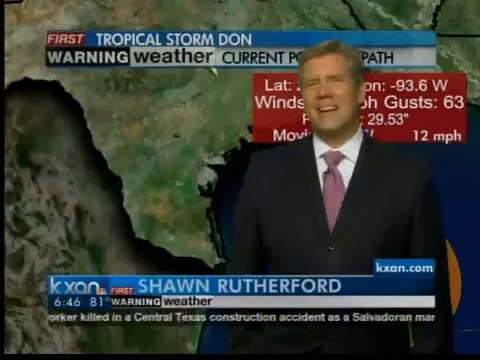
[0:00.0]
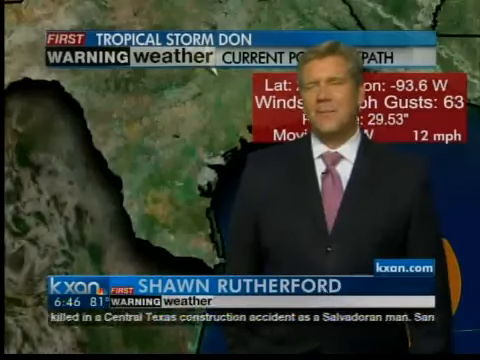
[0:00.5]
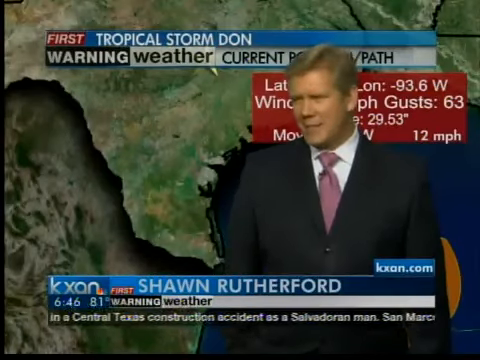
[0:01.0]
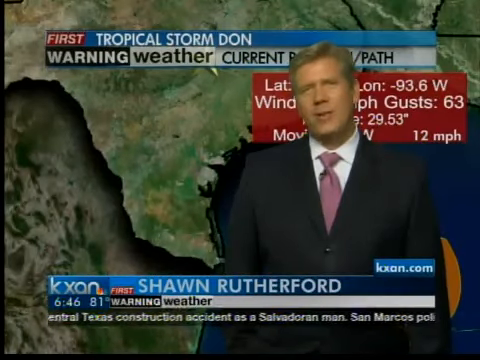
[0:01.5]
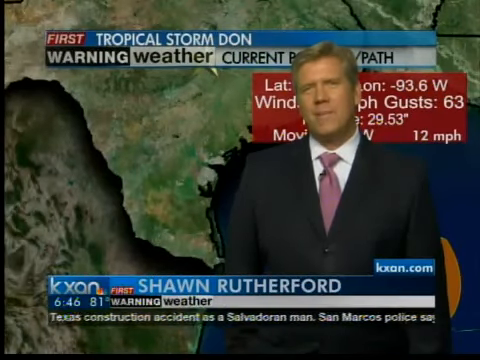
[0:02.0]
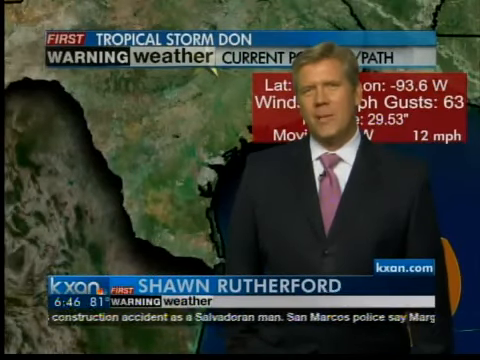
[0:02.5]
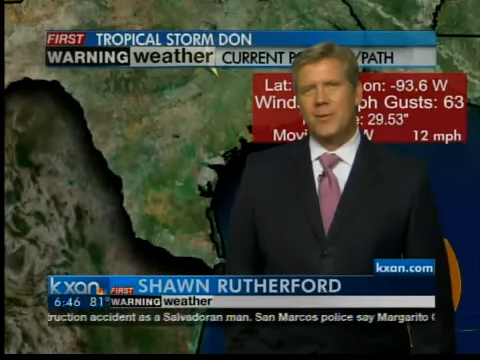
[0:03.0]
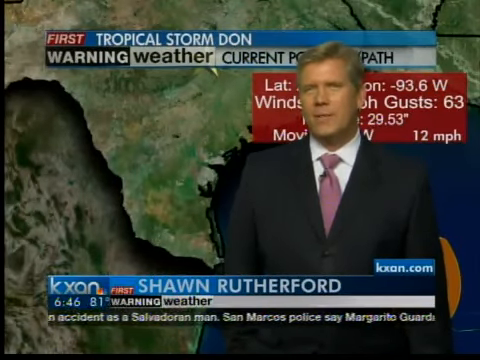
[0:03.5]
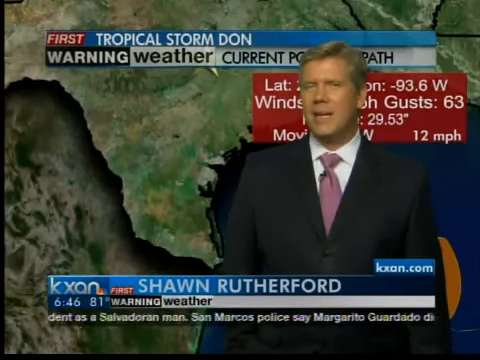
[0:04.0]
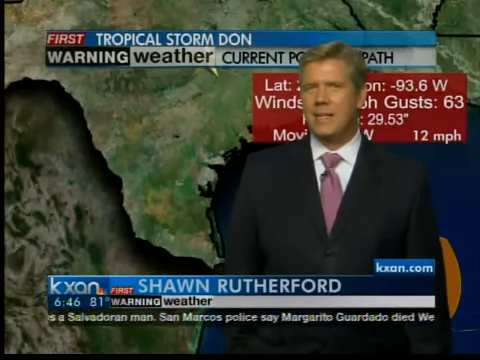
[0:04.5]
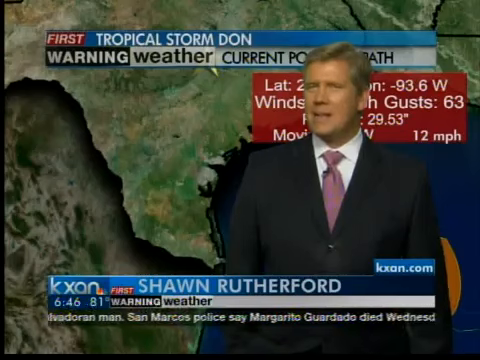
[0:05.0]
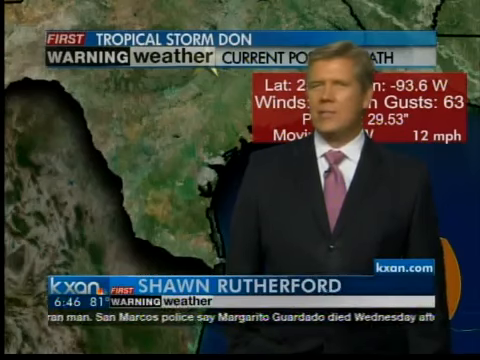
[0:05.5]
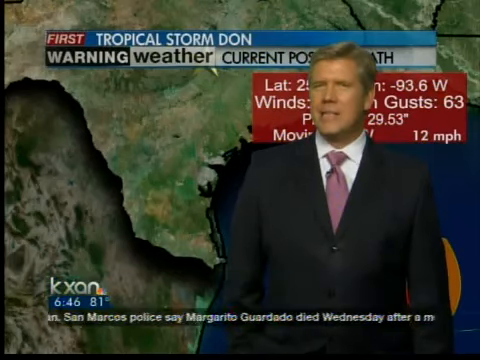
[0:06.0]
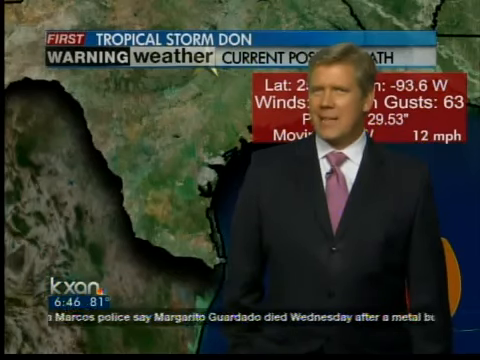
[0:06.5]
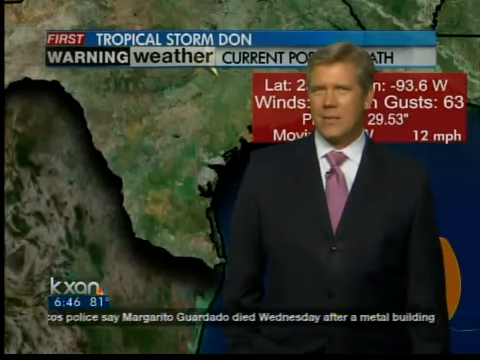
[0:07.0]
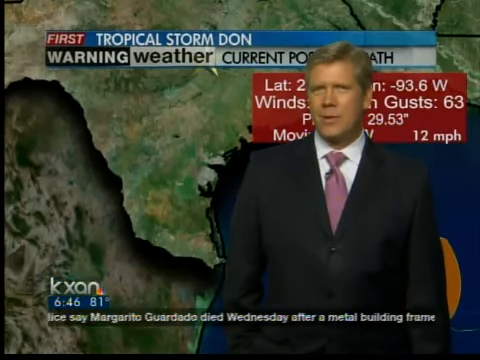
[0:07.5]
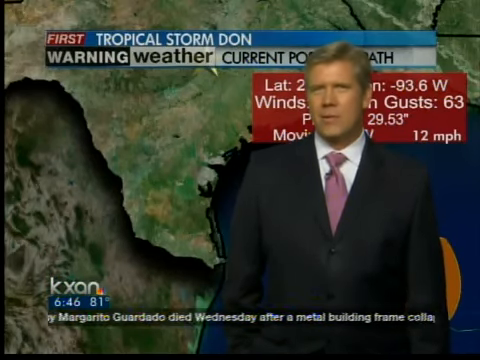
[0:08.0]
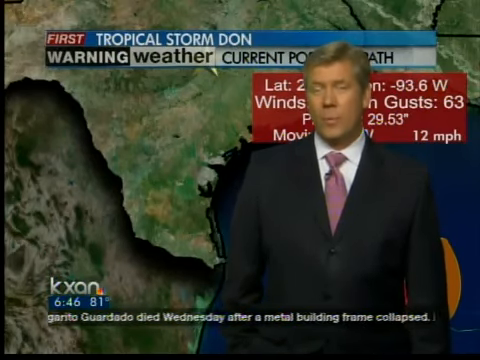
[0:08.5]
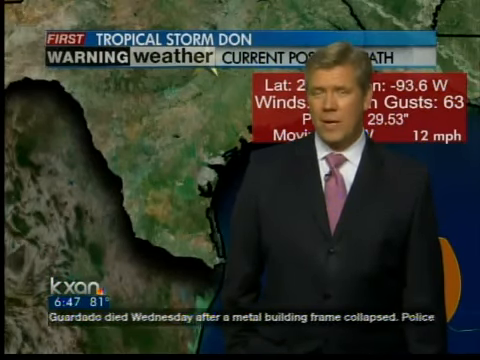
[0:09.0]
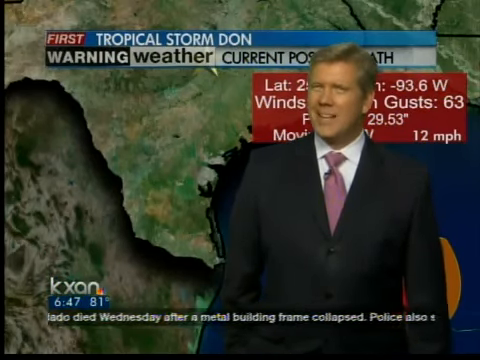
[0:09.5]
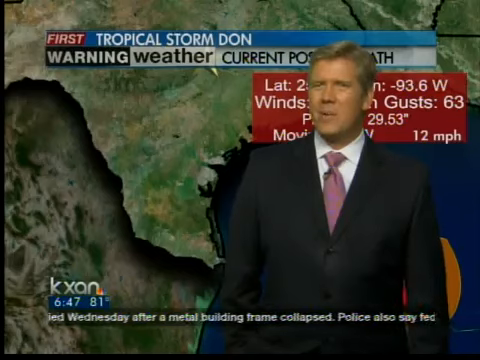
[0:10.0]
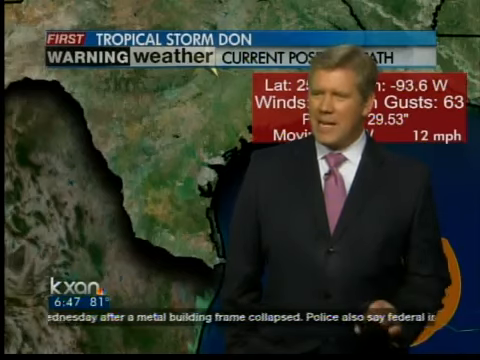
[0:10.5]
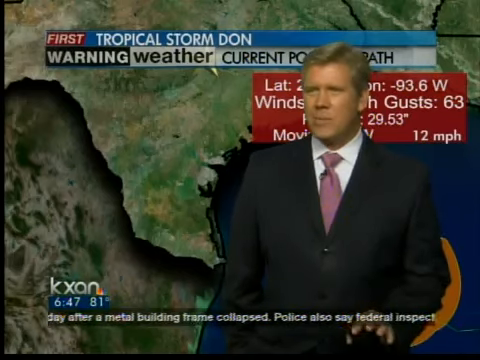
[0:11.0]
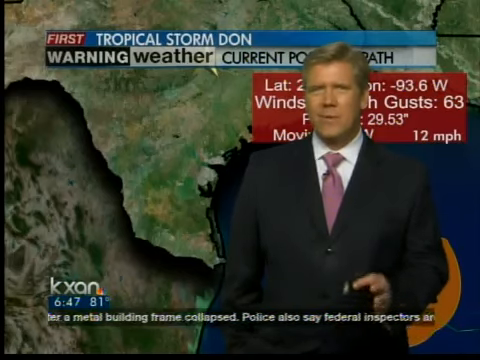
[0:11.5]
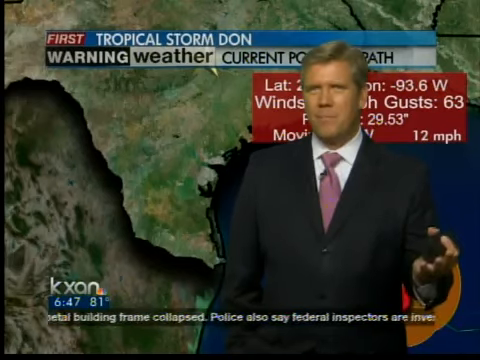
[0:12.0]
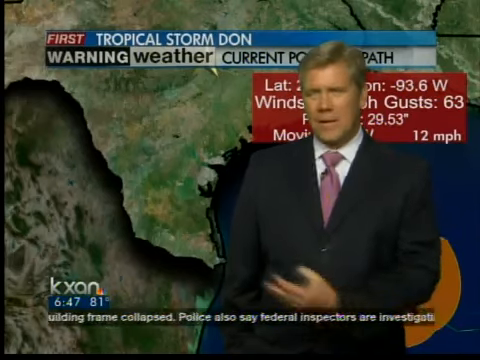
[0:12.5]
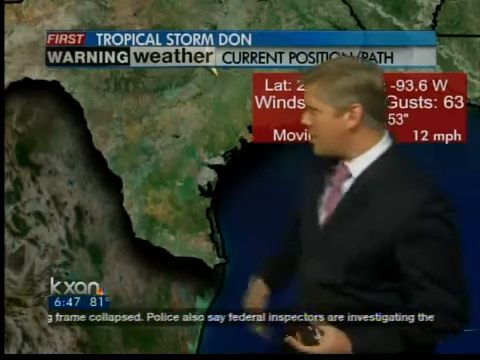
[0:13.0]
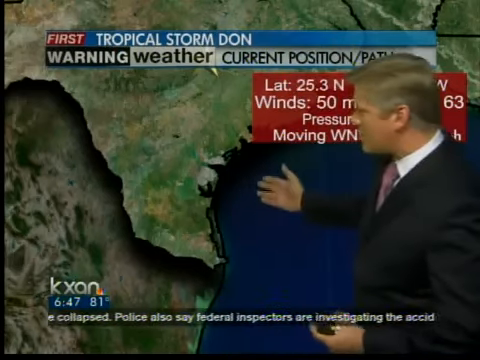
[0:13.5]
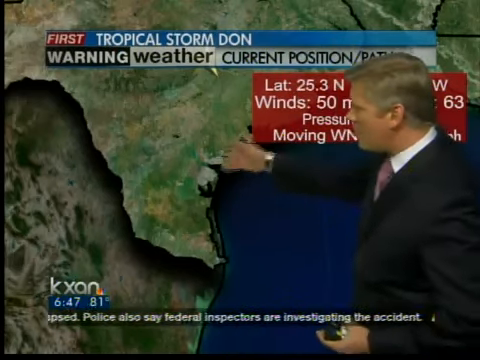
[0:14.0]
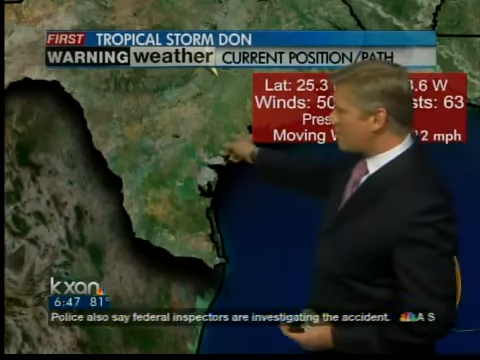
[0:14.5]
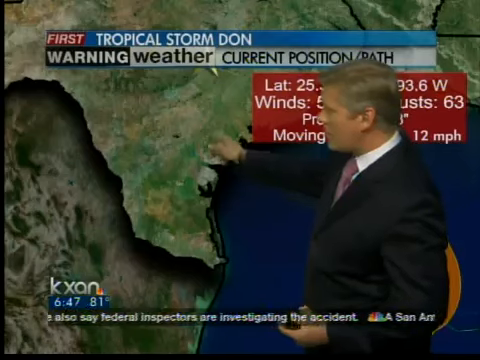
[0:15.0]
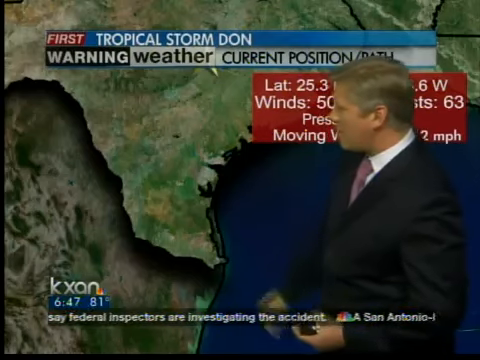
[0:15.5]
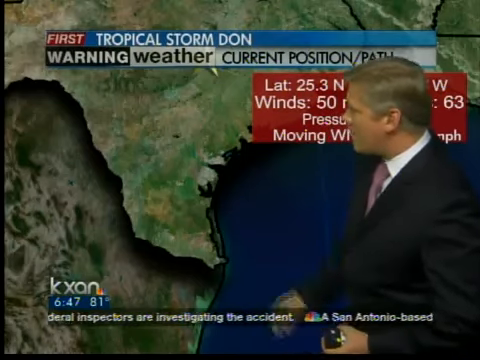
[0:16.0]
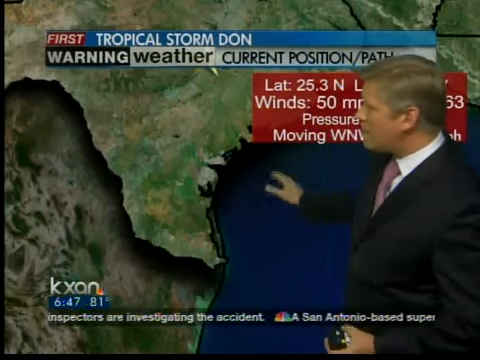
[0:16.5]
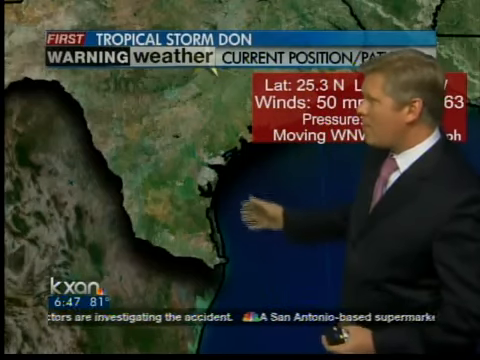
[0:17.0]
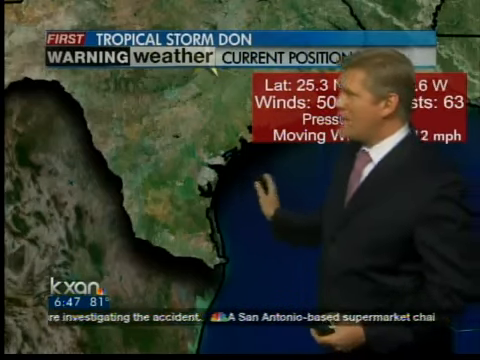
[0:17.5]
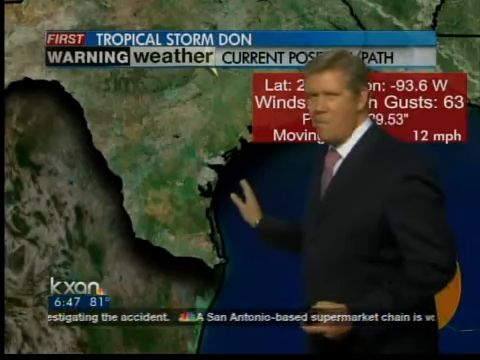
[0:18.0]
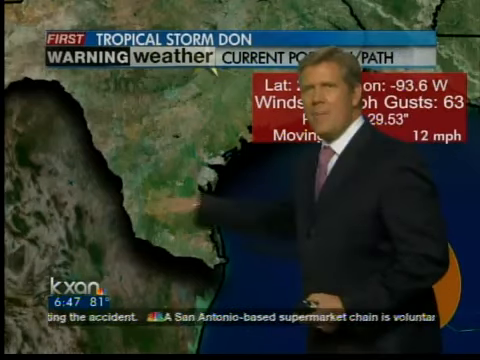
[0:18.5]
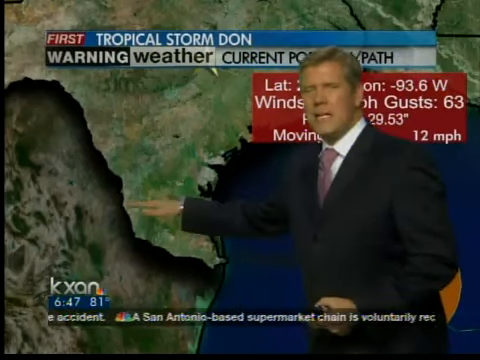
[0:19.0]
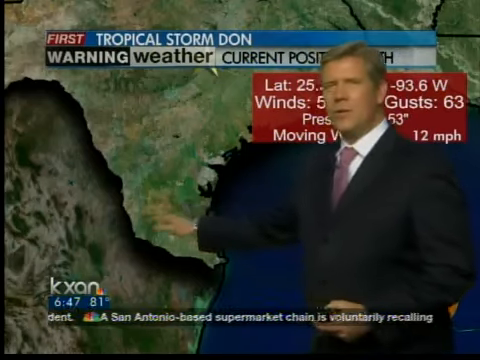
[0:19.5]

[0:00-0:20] The scene is a map of Texas. Across the top is a blue gradient bar; its top half reads "first tropical storm Don" and its bottom half reads "warning weather current position / path." The area under the word "first" is colored red, the area under "warning" is black, and the rest of that bottom segment is white. Below and to the far right of this upper bar is a red rectangle with stats such as latitude and wind speed. A weatherman partially obscures that red area. He is a Caucasian man of about his late 40s with blonde hair and a tan complexion, wearing a dark blue suit with a white shirt and a pink tie. Beneath him is another bar similar to the top one. It reads "kxan" on the left, with a small NBC logo at the end of the n, then "first" on a red background, and "Shawn Rutherford." Above the right end of that bar, "kxan.com" appears in another blue rectangle. The bottom half of the footer bar shows the time, the temperature, and the subtitle "warning weather" again. Below that is white text on a black rectangle, and below that are scrolling headlines. Shawn speaks, and the blue bar at the bottom disappears, leaving only the kxan and NBC logo with the time and temperature directly beneath them. He continues to speak as the headlines scroll to the left. He moves his left hand up and down a little, then gestures to the map with his right hand, points at the middle of the tip of Texas, and makes a pushing motion toward it.